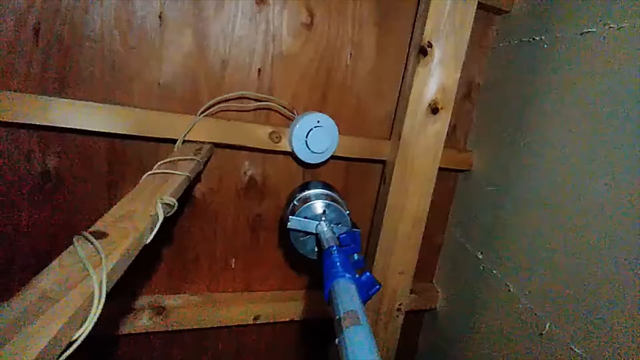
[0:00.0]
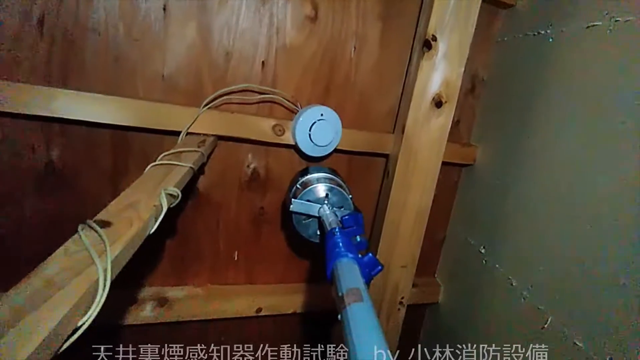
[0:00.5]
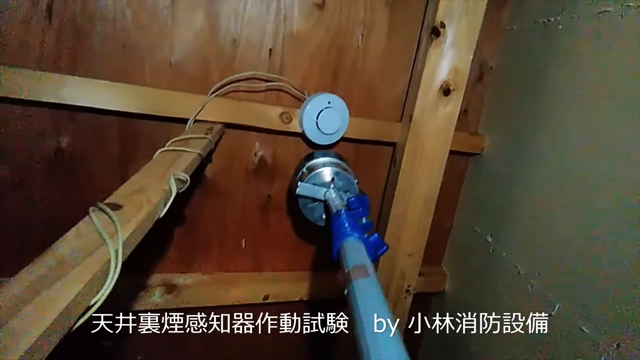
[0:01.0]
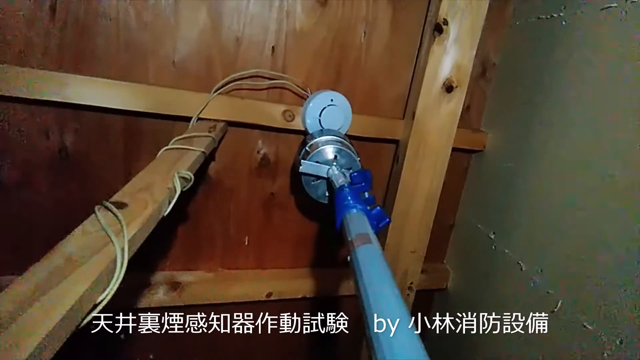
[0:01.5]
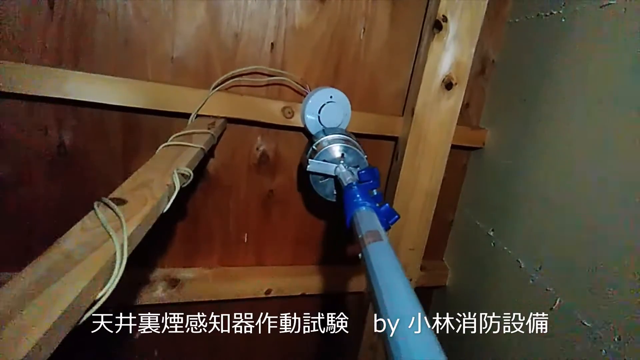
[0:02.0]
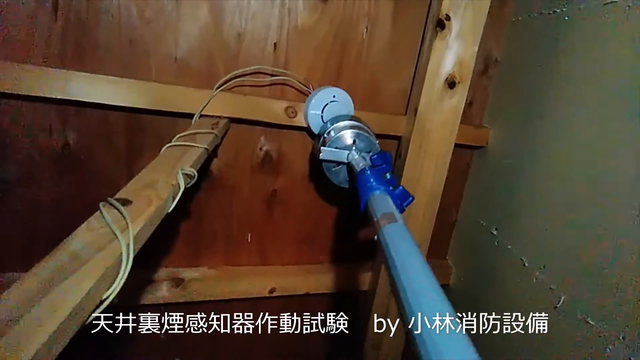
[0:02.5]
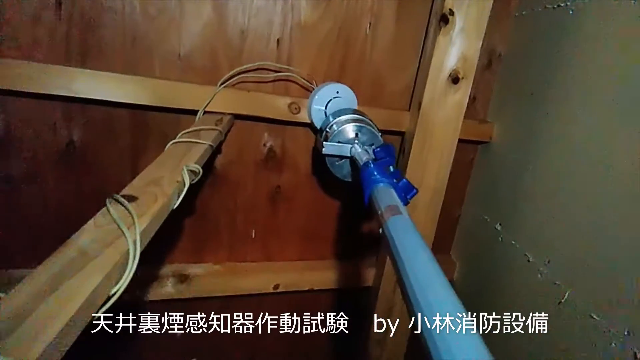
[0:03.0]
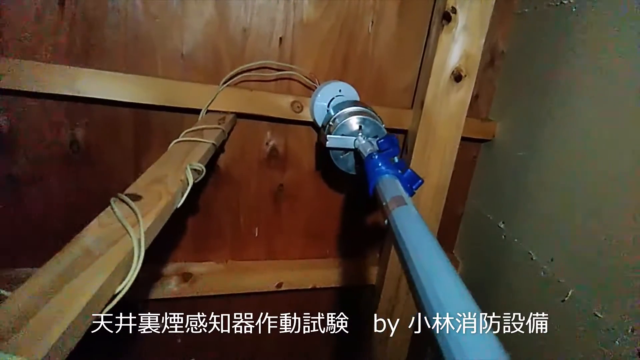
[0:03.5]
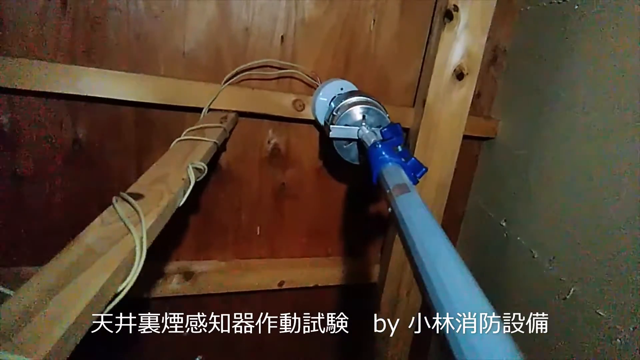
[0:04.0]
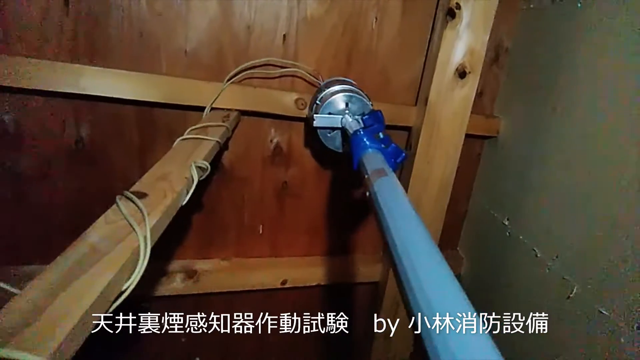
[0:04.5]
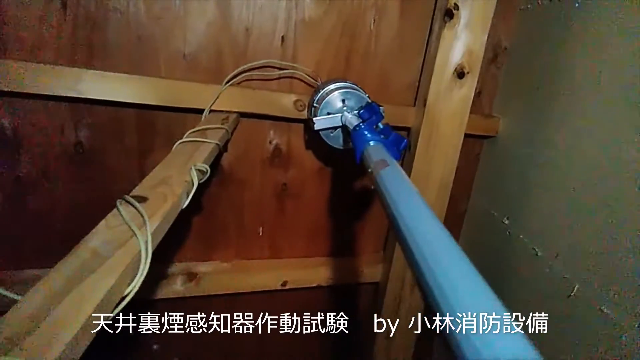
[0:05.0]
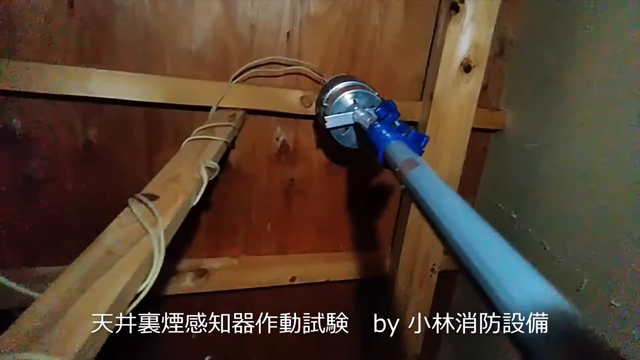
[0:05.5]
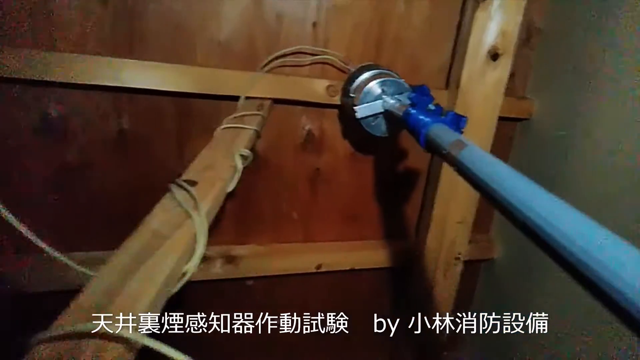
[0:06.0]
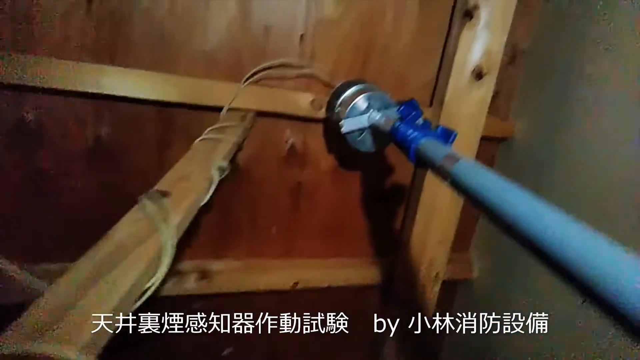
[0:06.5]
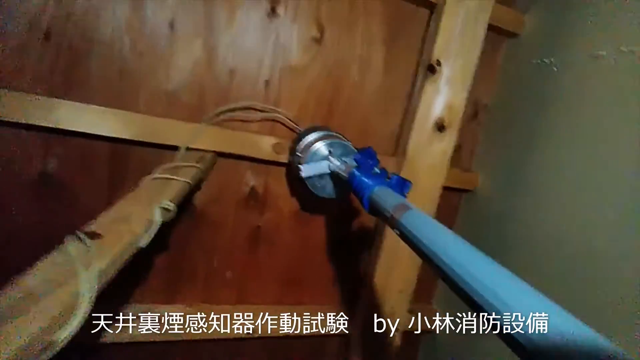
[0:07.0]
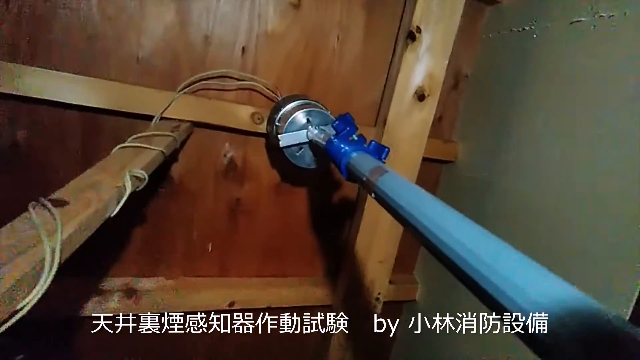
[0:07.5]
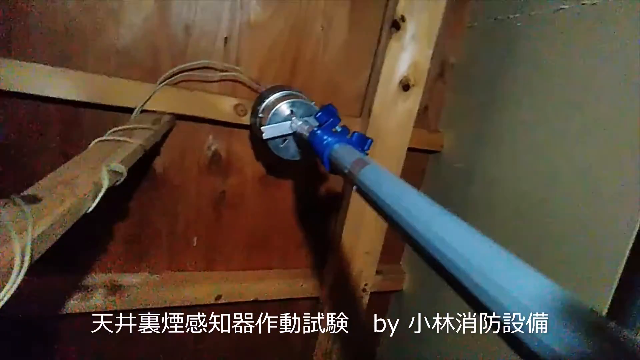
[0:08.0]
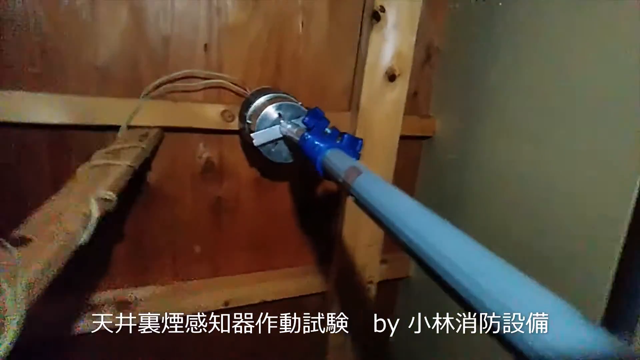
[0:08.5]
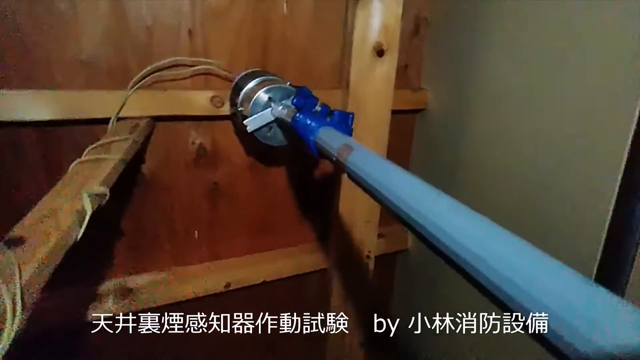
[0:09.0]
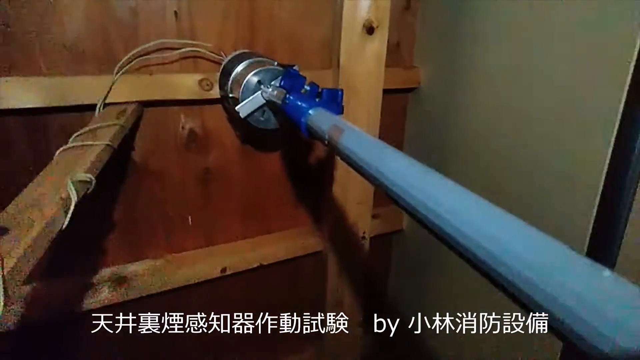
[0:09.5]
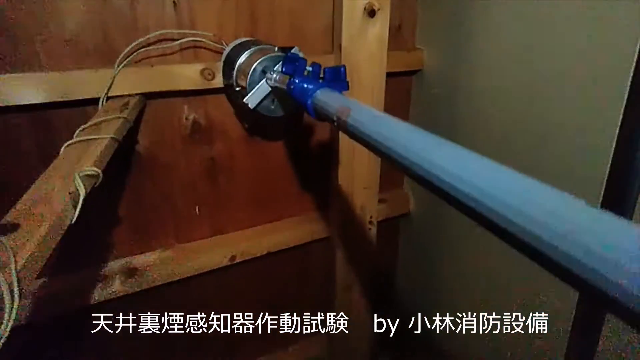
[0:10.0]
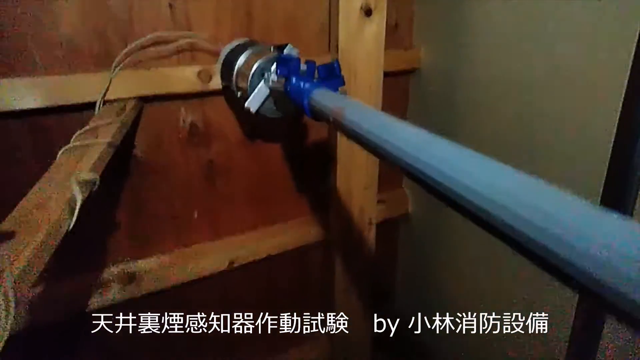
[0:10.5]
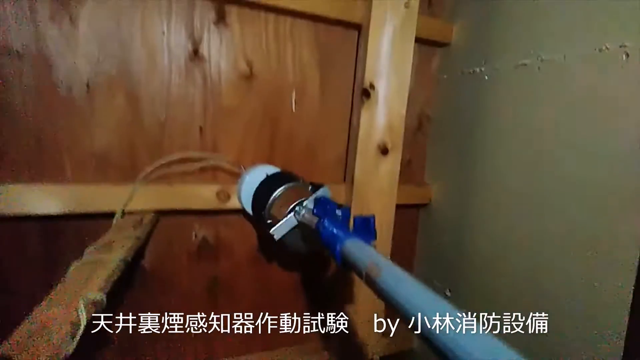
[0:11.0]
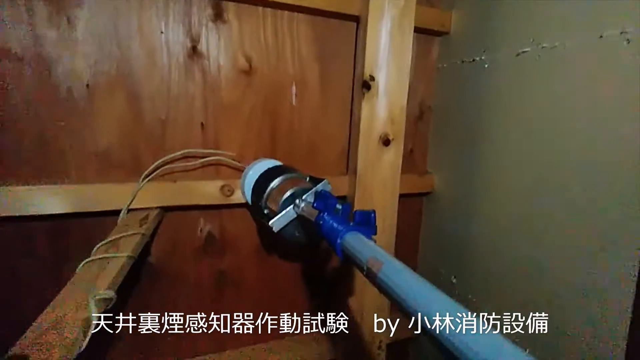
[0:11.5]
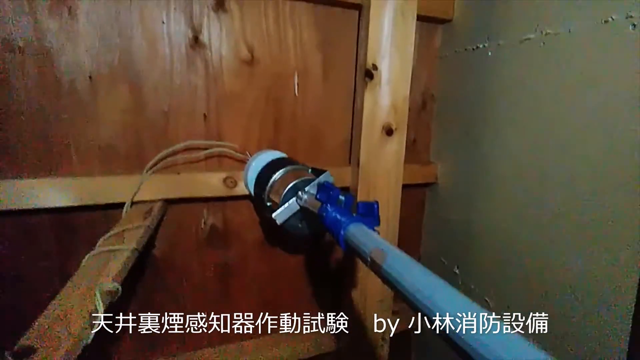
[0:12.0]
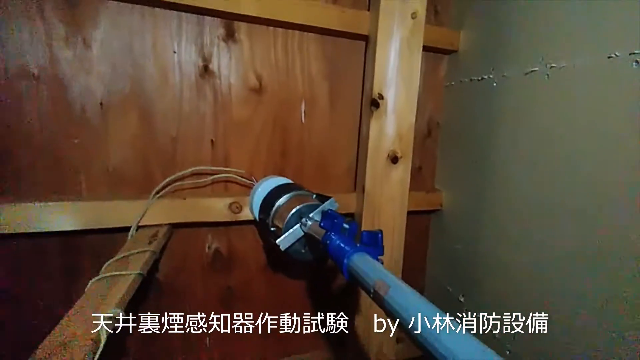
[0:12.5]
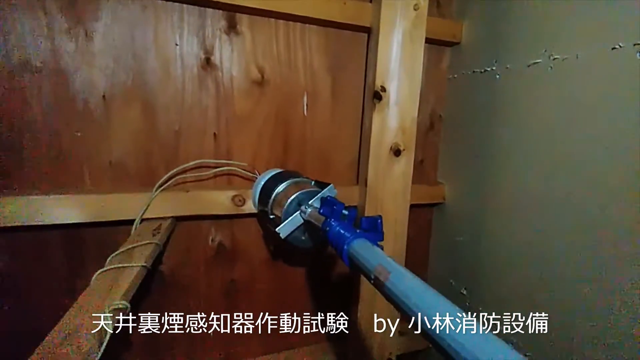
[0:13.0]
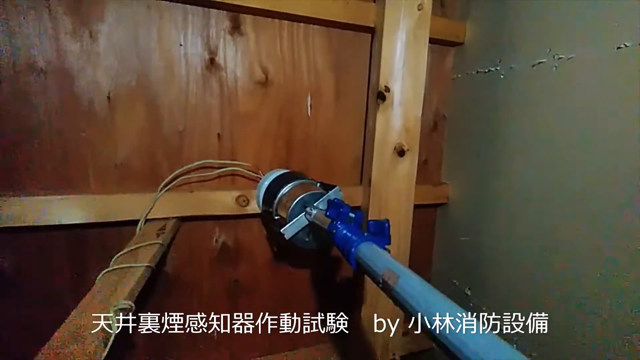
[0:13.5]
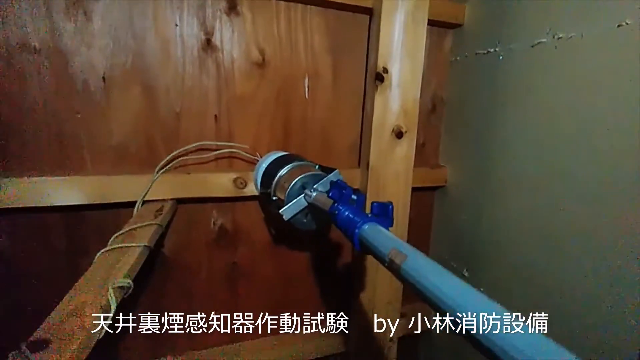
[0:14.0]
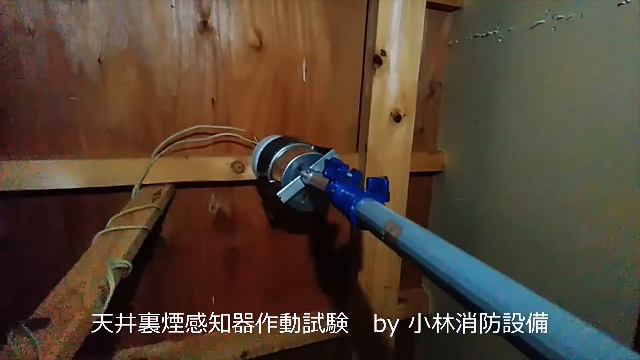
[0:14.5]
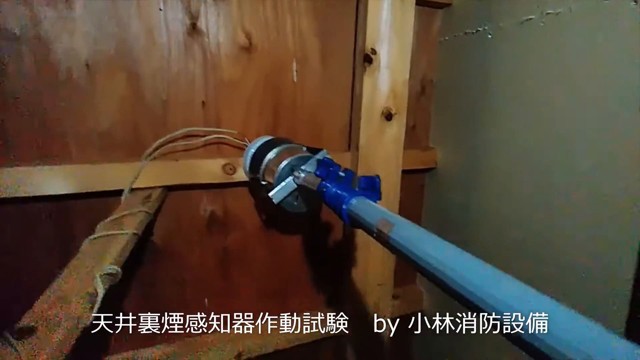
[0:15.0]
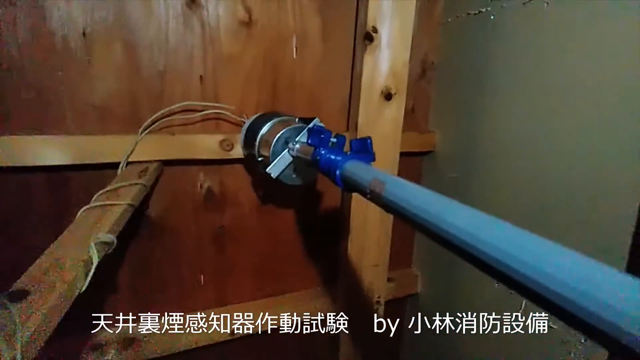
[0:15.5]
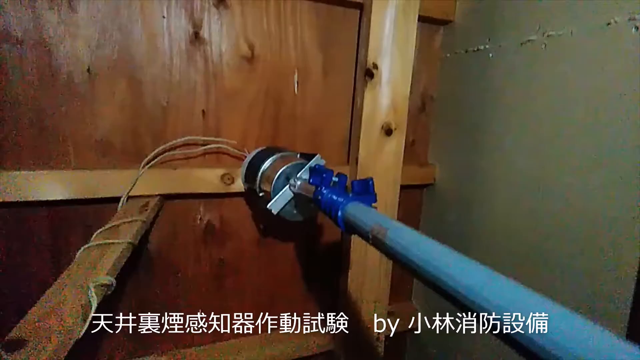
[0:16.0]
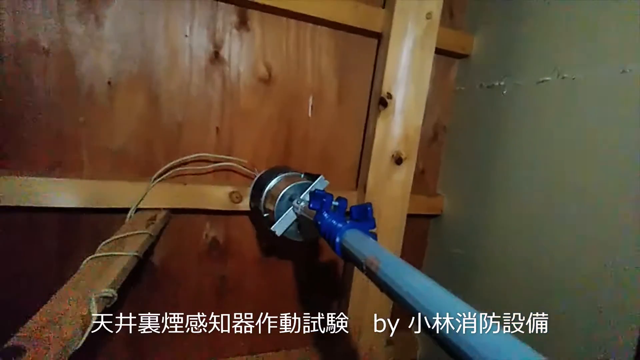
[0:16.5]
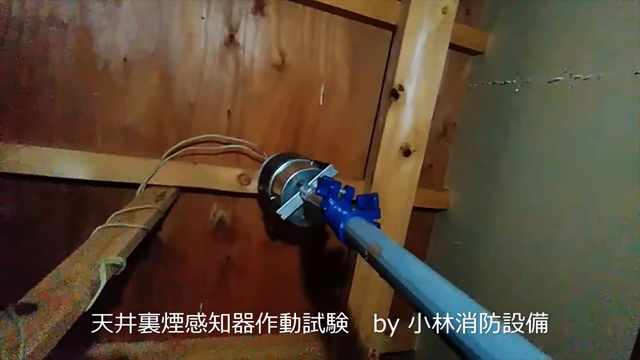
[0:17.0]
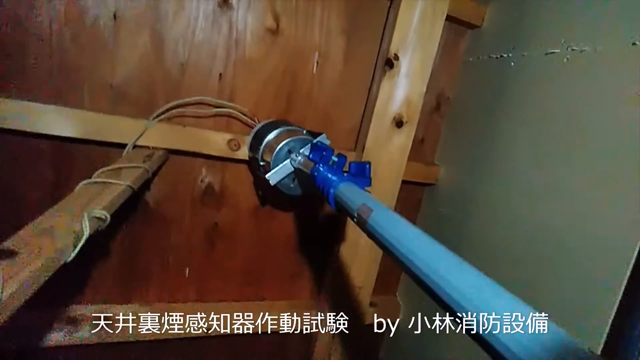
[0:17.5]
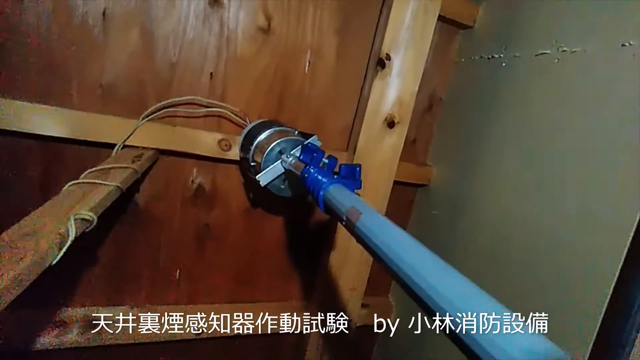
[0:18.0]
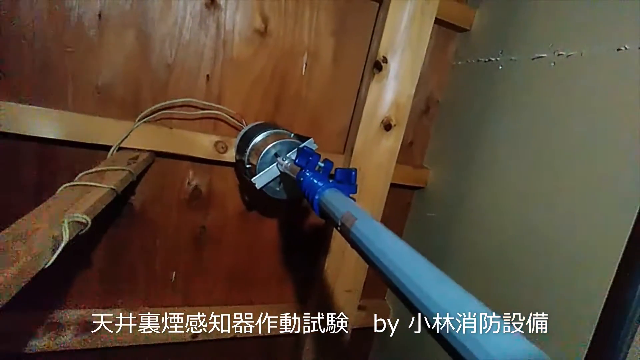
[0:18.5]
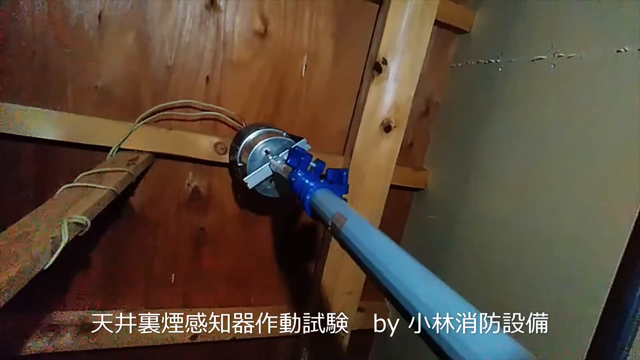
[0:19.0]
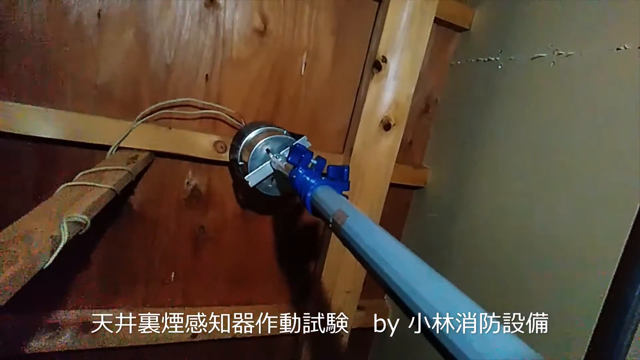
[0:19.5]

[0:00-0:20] Someone apparently operates a tool, possibly to inspect a smoke detector or maybe to remove or unscrew it, though the purpose is unclear. A metal arm has some blue plastic around its end, and the view looks up into some rafters in the ceiling of an unfinished area, maybe a crawl space or a storage room. Some wires that come off the smoke detector are wrapped around a strut. The item on the blue pole has a swiveled, round end that looks about the shape and size of the smoke detector, and it is pushed over the detector. The cylinder that fits over it looks exceedingly large.